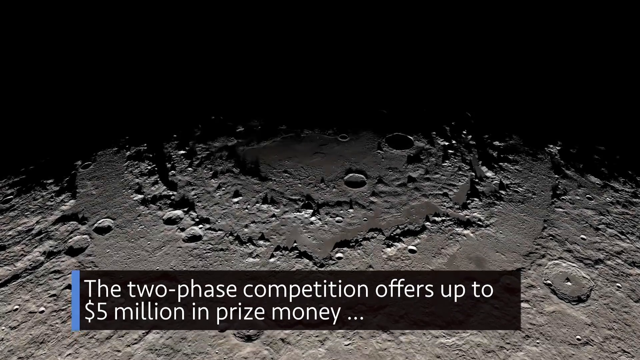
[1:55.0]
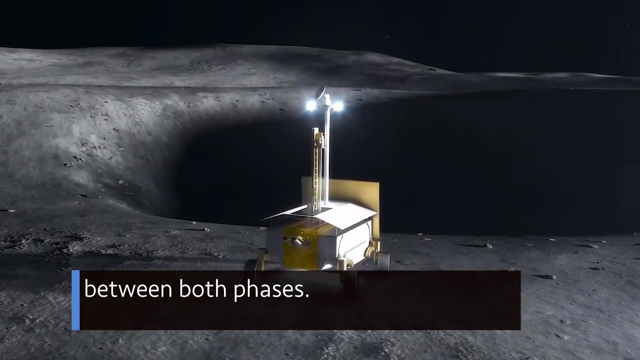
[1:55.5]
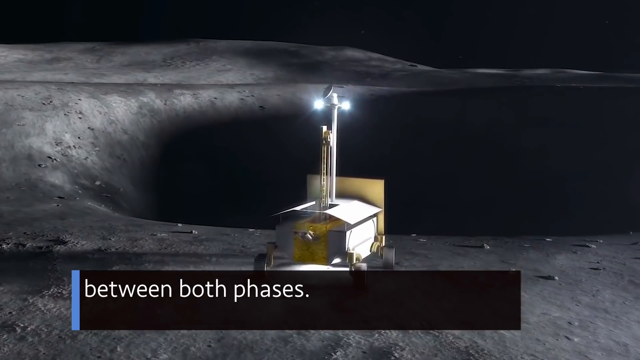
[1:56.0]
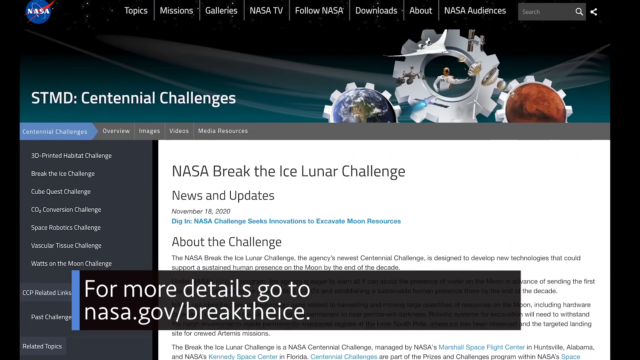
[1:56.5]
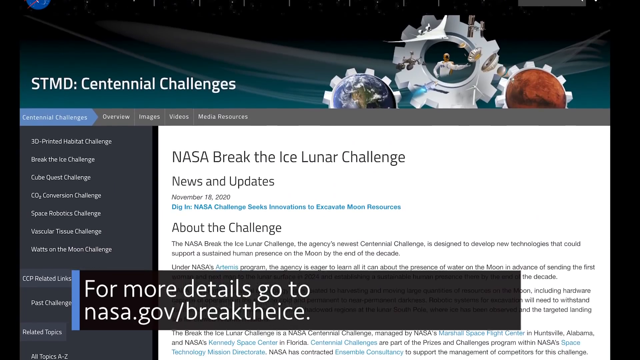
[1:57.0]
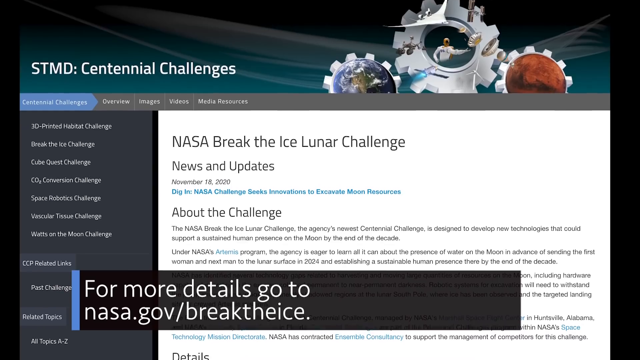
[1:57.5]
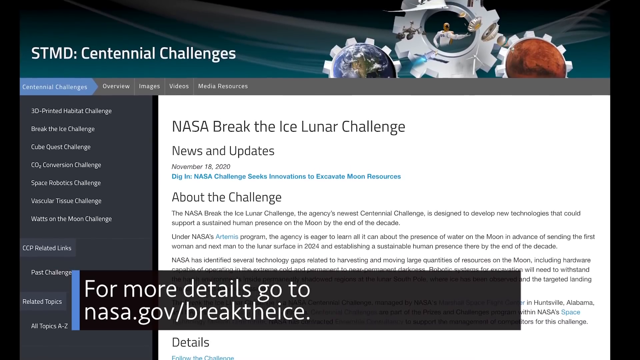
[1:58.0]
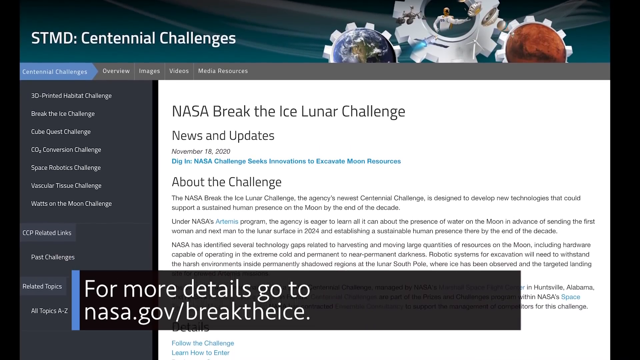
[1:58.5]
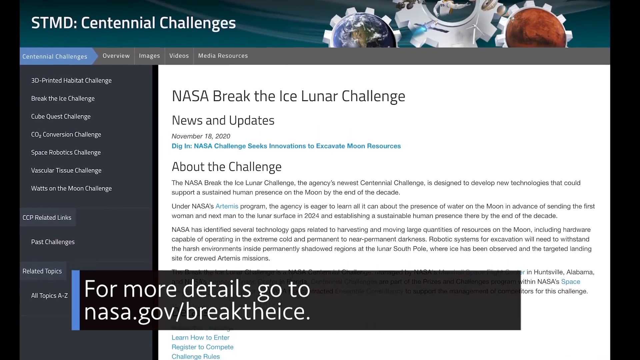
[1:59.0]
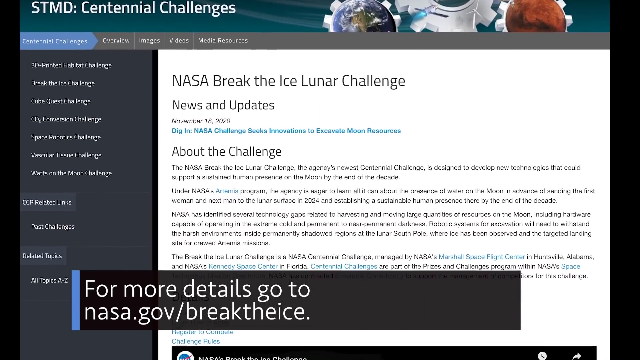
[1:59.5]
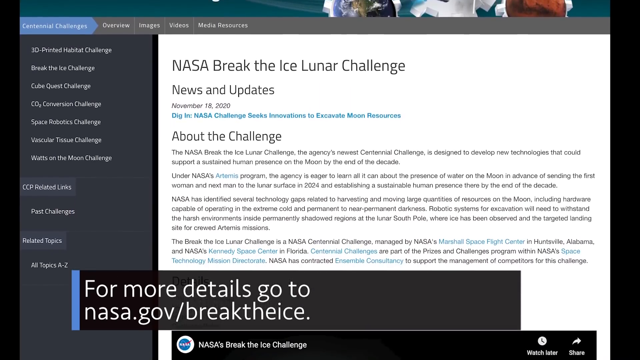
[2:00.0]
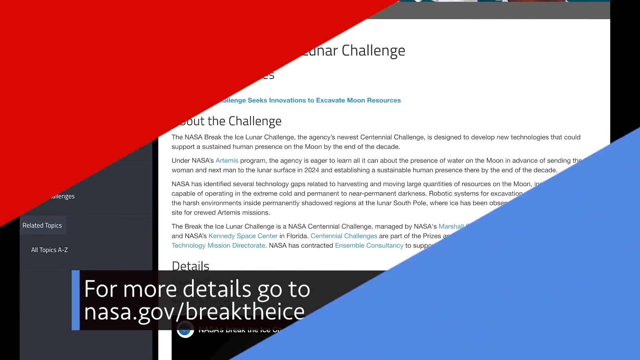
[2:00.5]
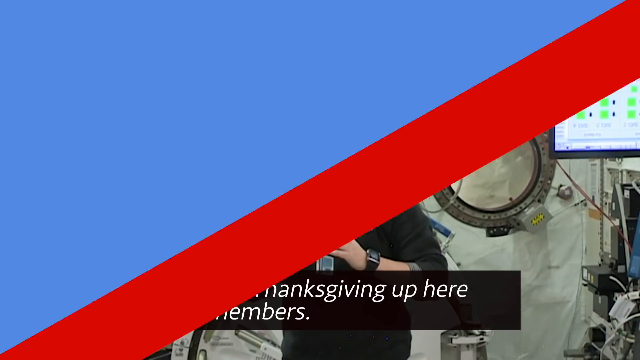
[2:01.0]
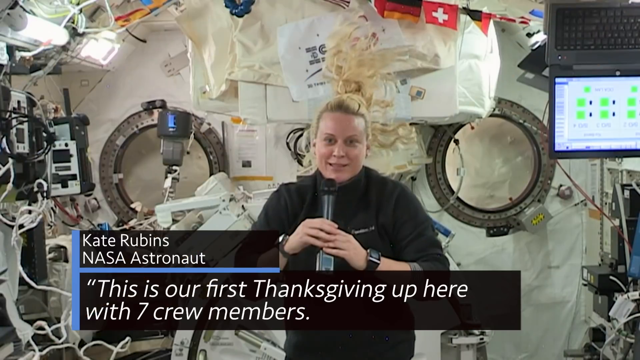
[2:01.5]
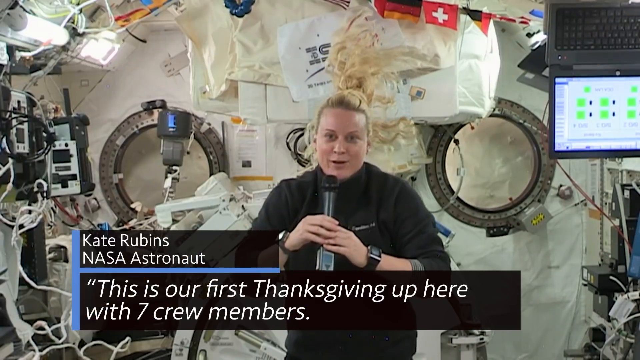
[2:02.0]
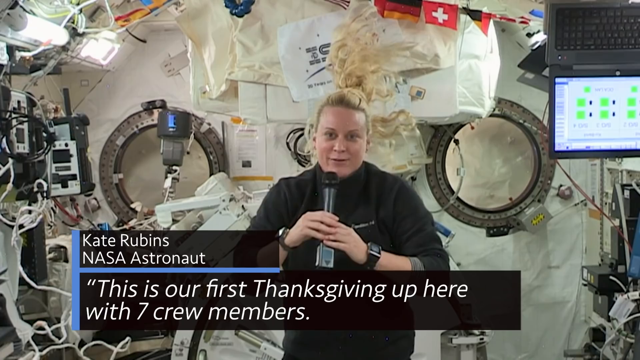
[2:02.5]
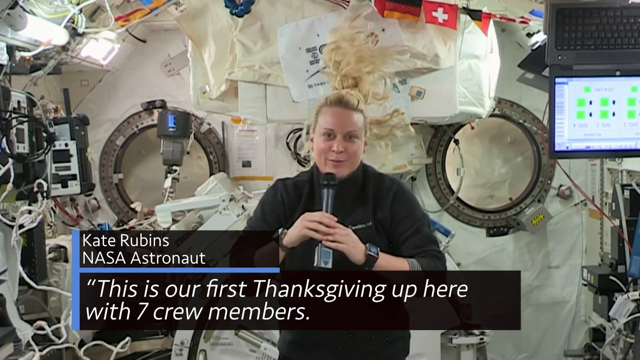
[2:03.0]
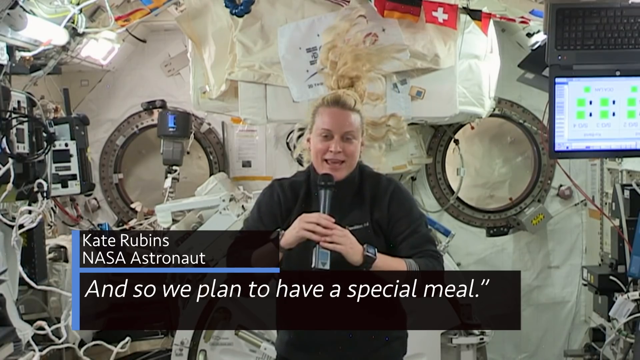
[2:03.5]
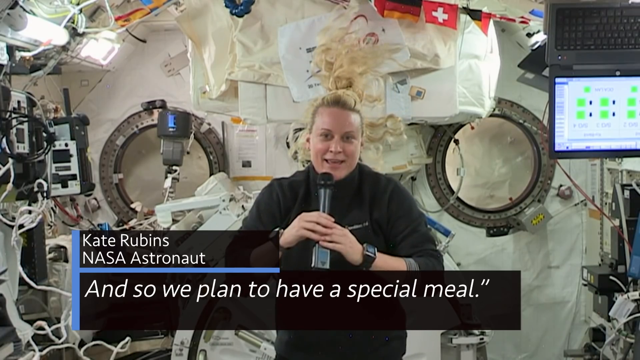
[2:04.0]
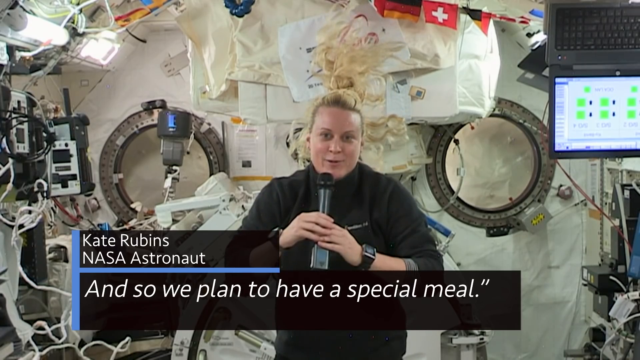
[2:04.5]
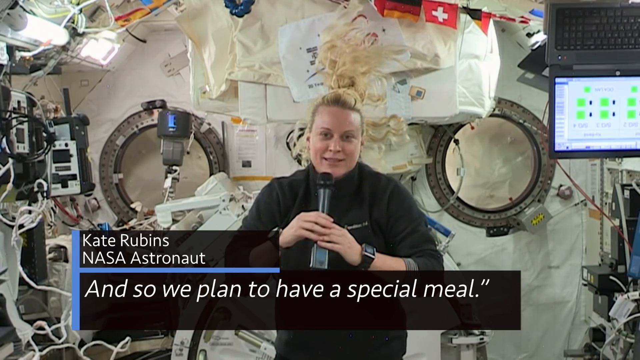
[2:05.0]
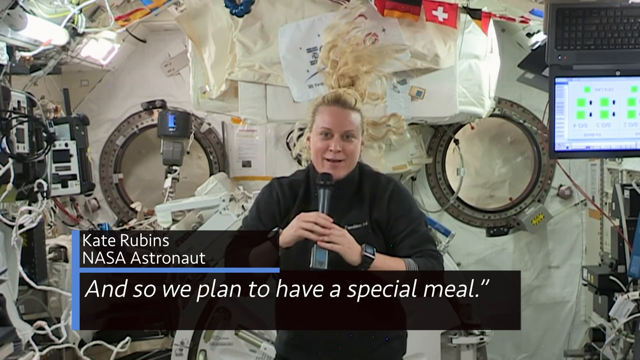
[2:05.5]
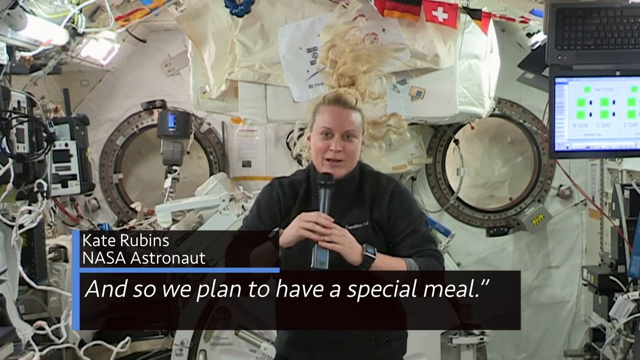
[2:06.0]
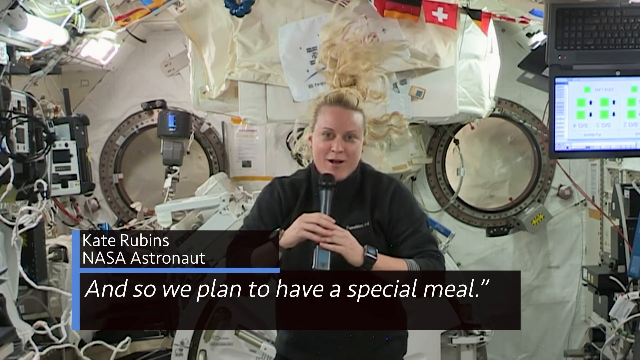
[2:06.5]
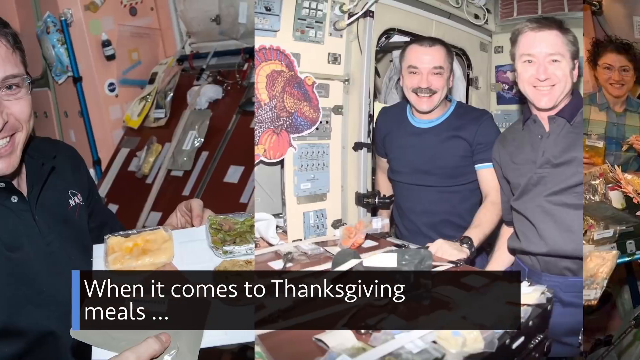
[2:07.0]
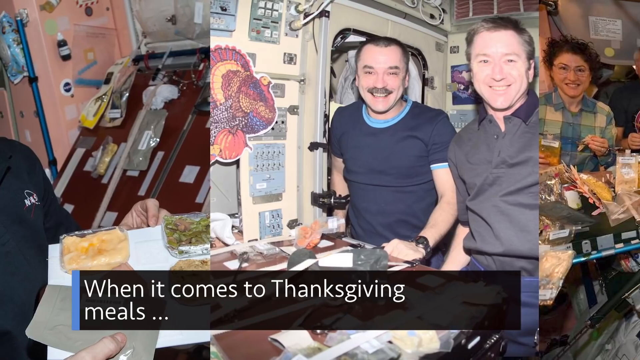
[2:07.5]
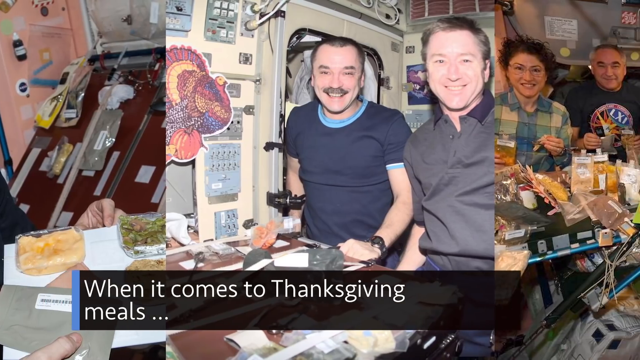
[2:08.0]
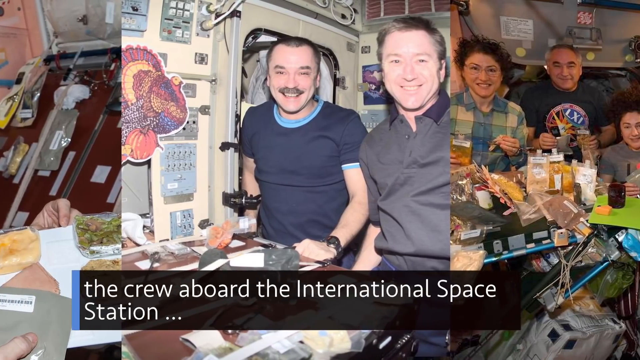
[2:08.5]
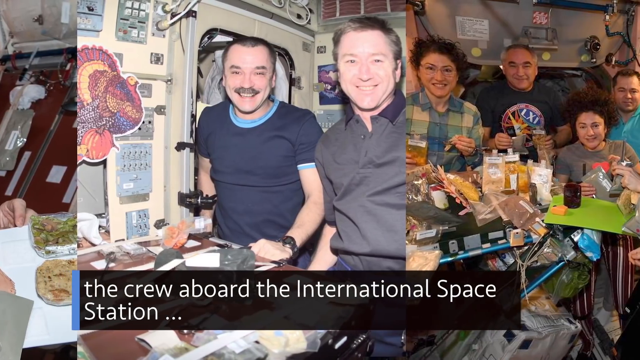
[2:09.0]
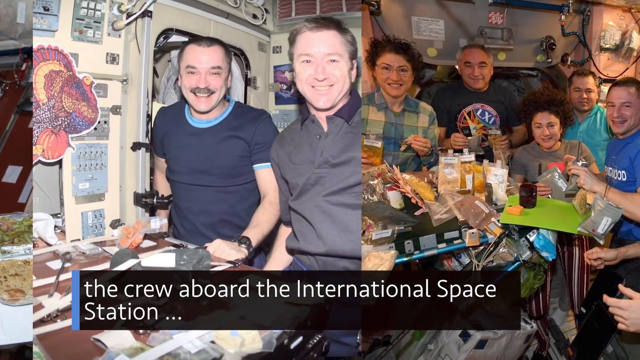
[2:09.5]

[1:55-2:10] A vehicle rolls across the moon, and text reads "for more data go to nasa.gov/break the ice." A picture of the Break the Ice challenge website follows. Then a woman, NASA astronaut Kate Rubin, appears talking, and pictures show a meal with all the crew members aboard the International Space Station at the meal.